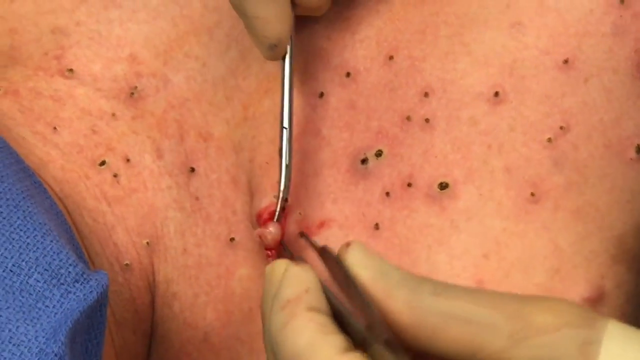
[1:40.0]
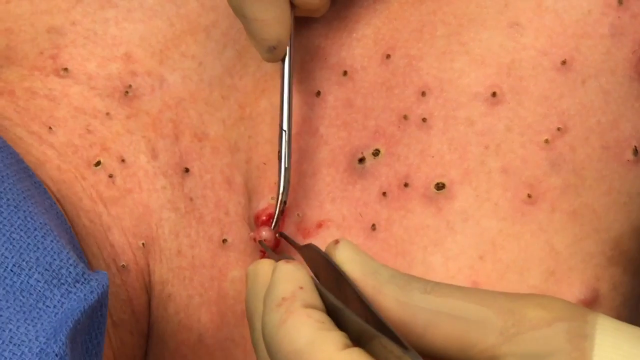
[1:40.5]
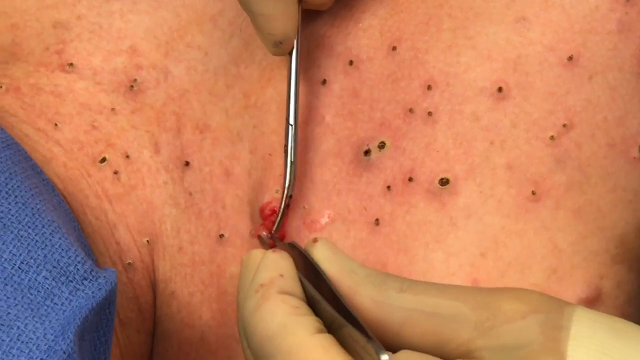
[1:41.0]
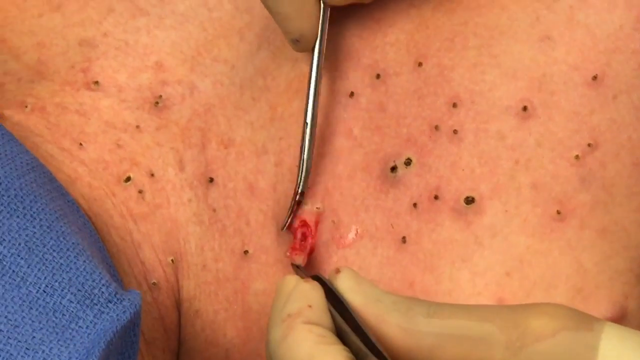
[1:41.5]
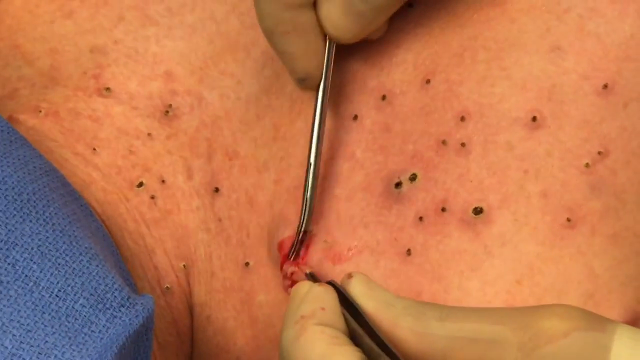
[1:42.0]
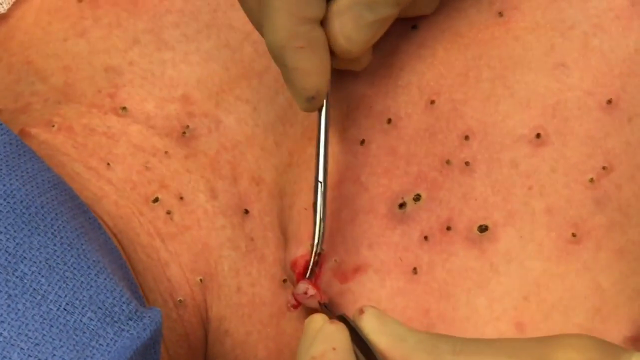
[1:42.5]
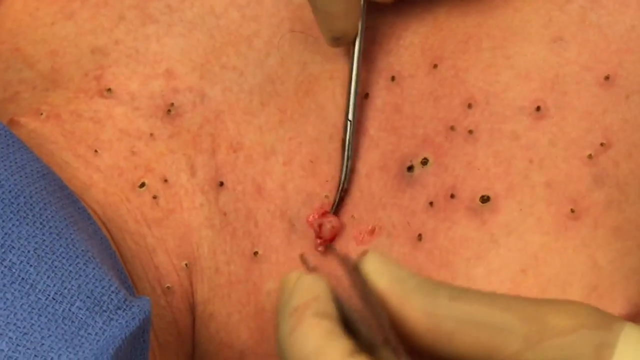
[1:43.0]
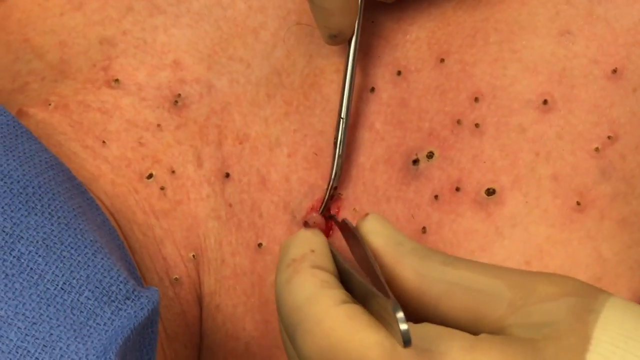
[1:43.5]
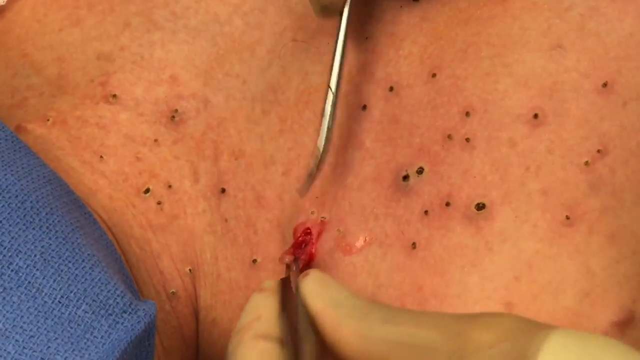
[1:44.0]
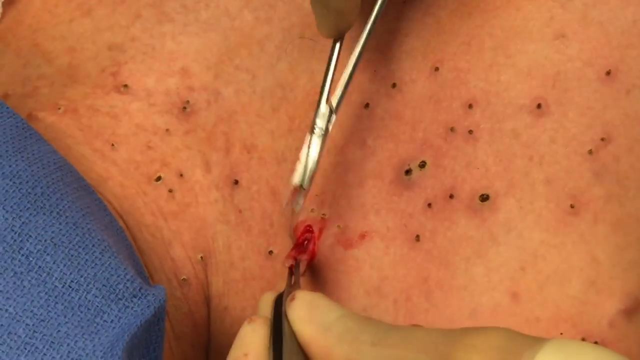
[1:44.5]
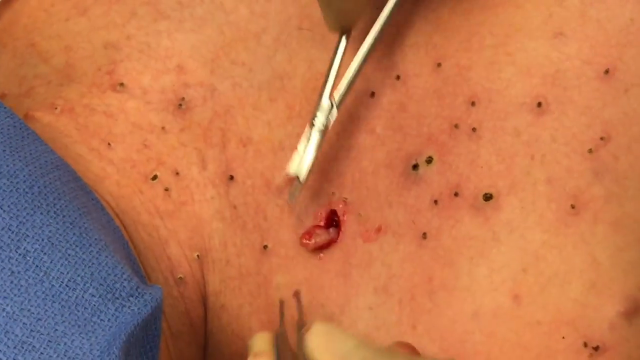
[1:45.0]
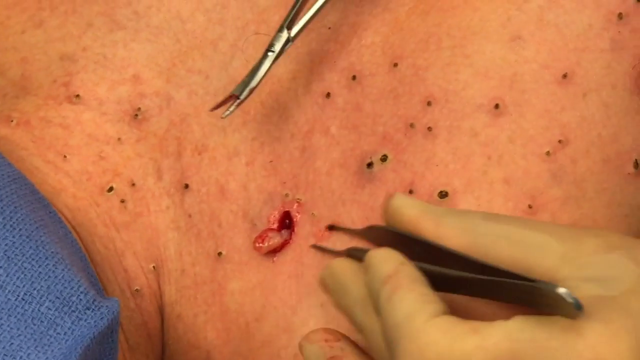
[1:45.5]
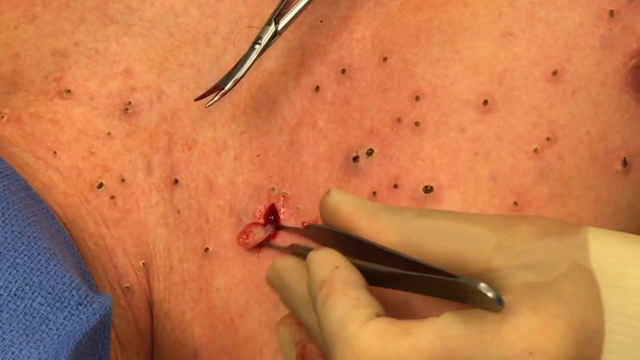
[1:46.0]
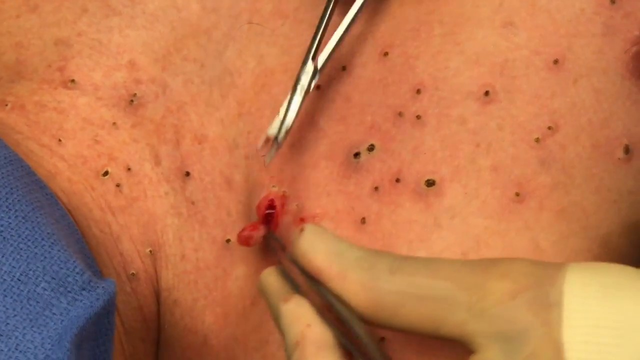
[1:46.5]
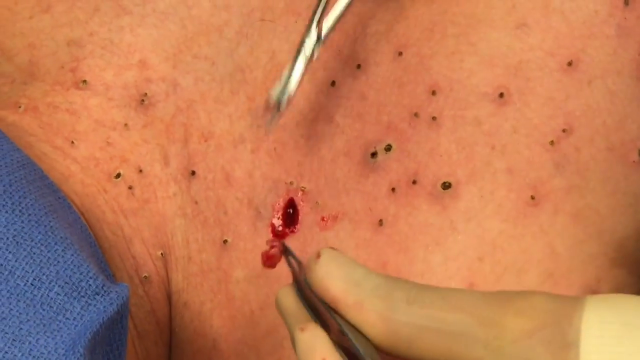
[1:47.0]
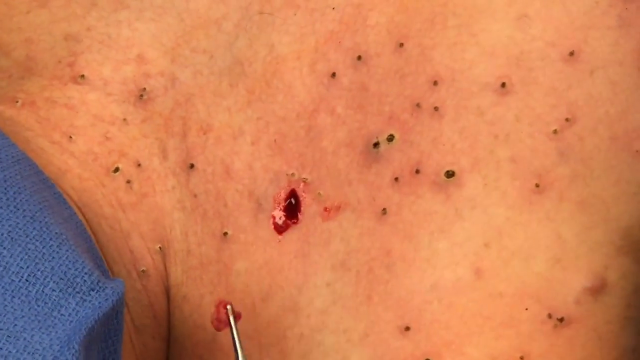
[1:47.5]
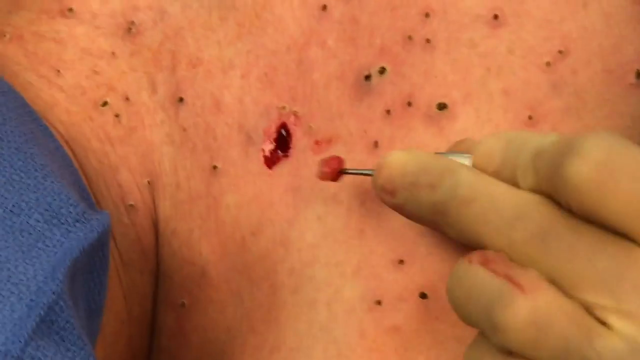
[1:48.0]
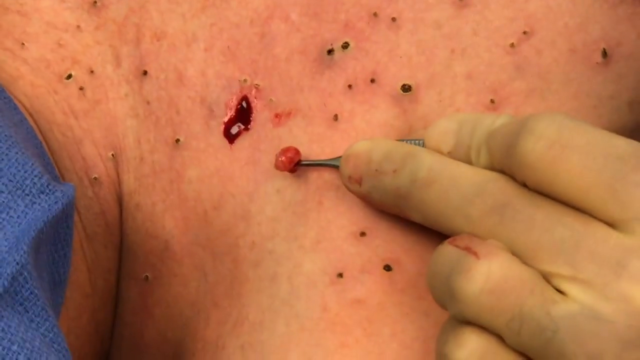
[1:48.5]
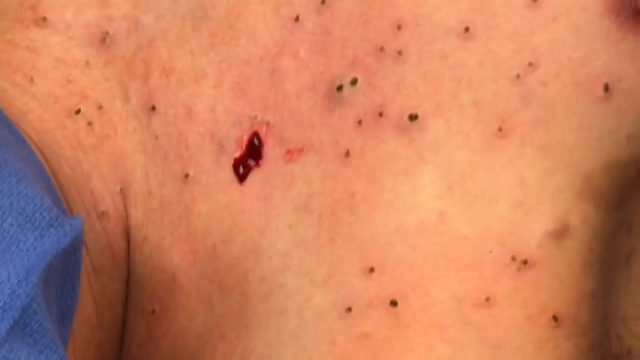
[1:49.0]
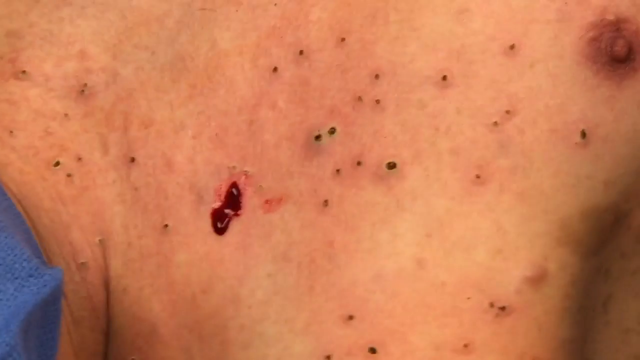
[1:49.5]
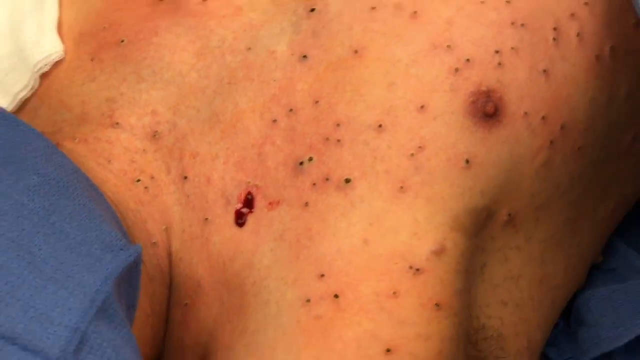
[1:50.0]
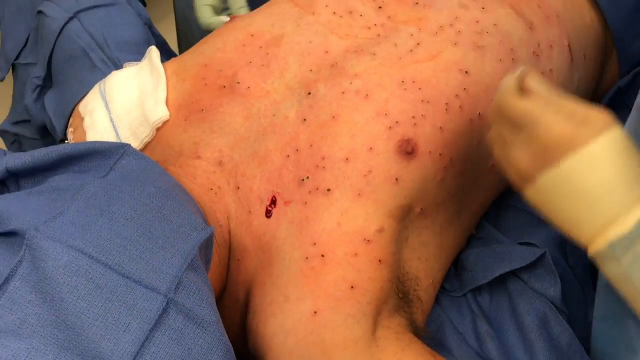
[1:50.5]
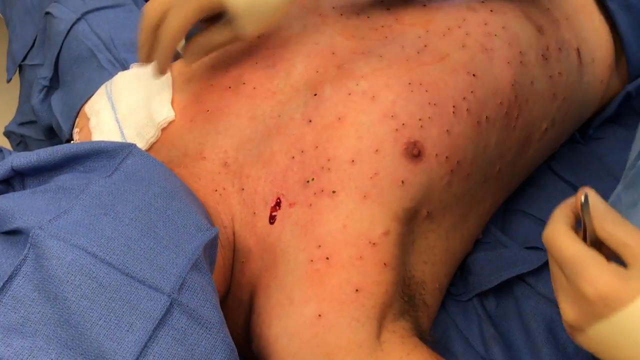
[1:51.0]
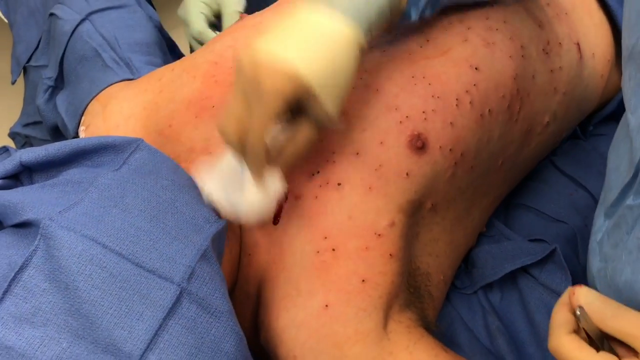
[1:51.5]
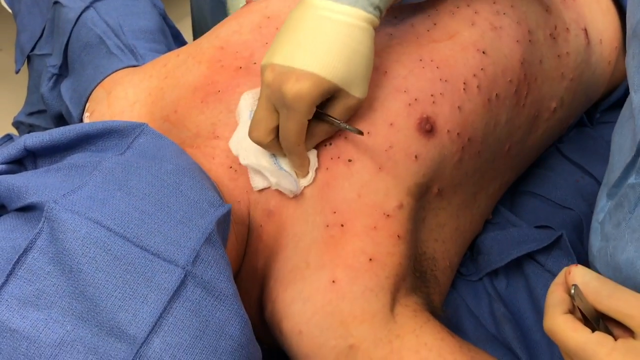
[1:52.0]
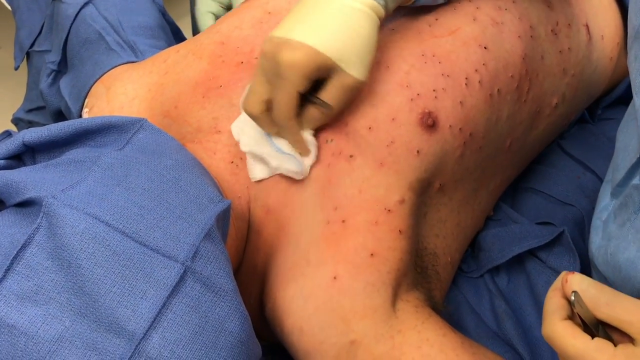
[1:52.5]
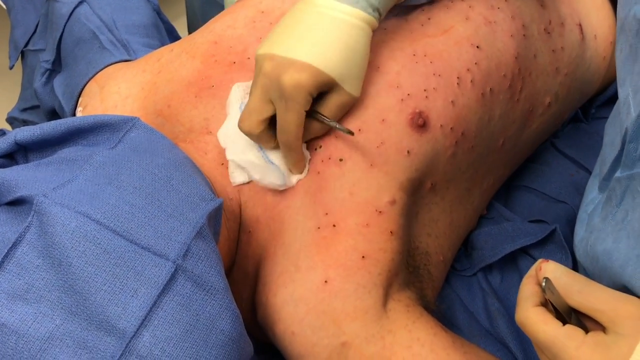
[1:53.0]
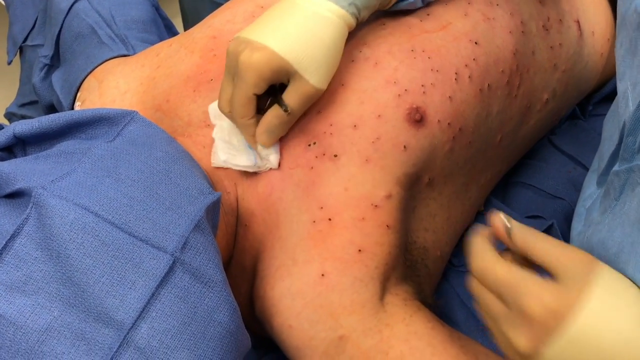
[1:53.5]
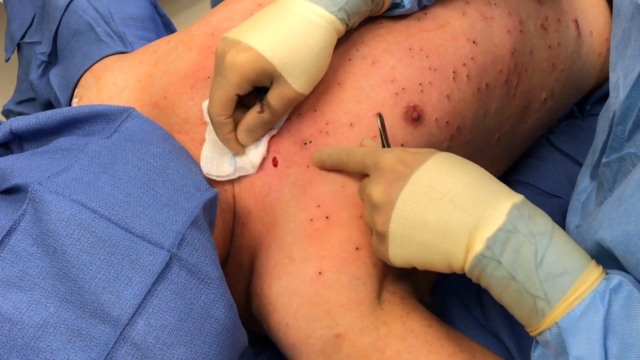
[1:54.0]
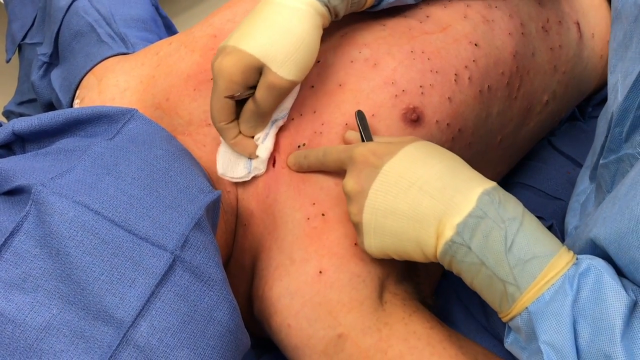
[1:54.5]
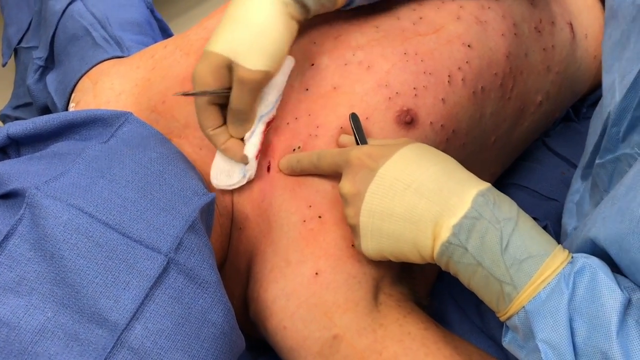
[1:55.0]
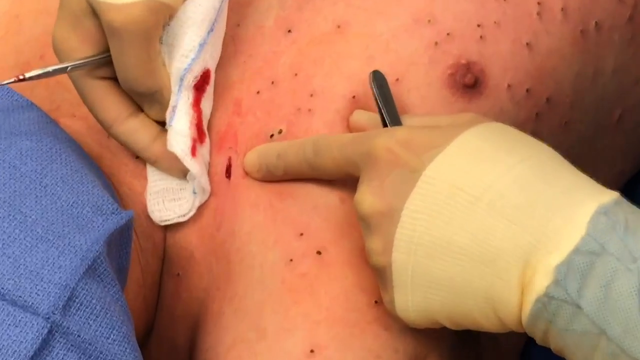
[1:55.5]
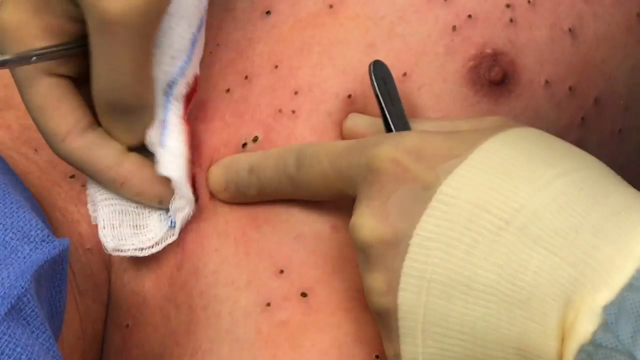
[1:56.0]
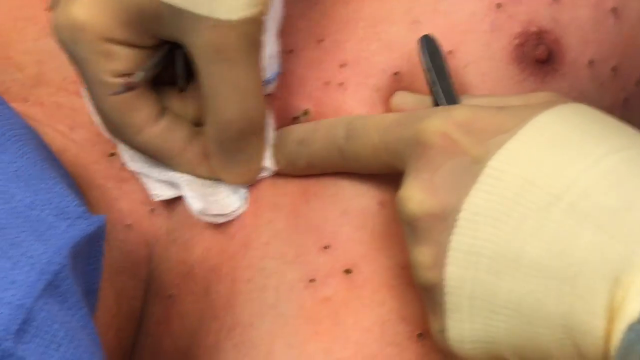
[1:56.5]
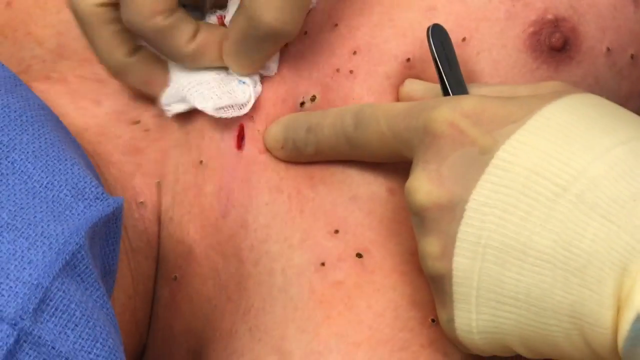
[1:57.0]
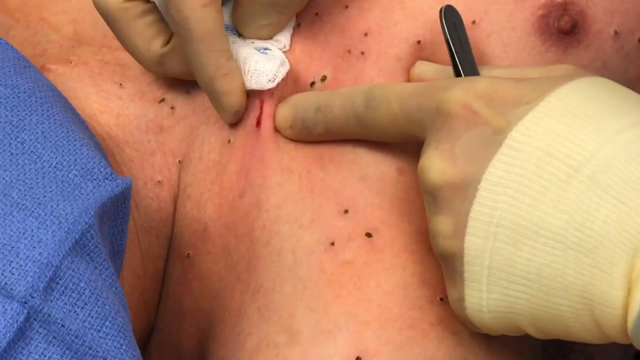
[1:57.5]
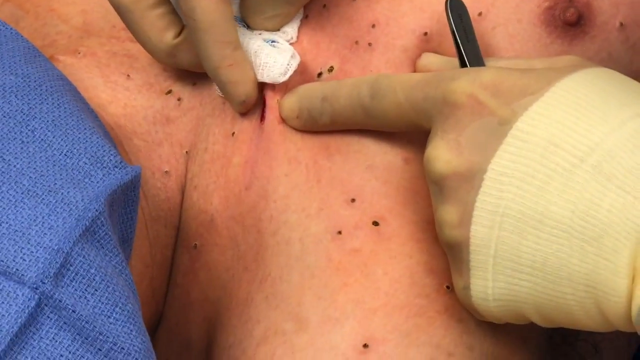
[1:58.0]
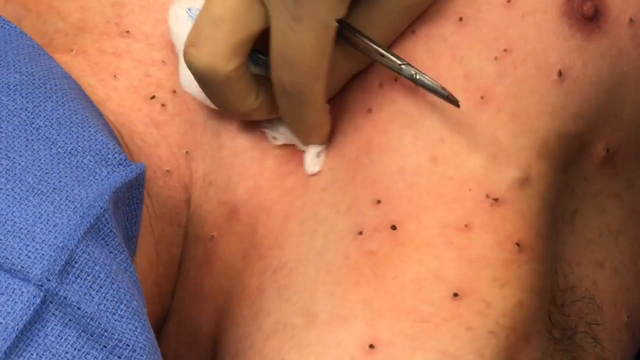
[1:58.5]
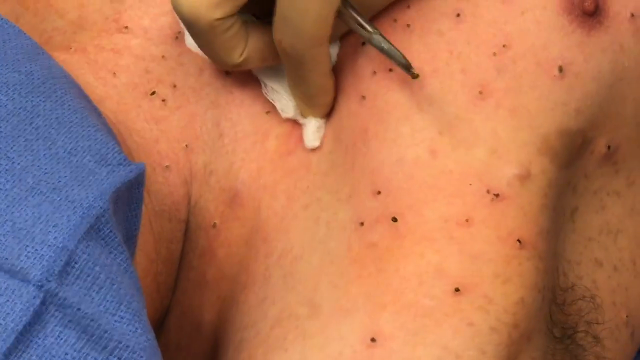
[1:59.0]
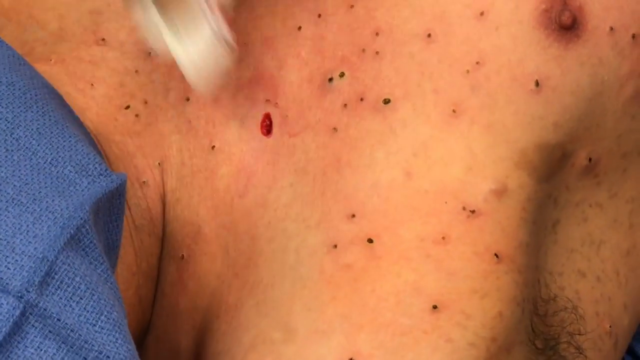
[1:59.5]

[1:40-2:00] The dermatologist works to remove the neurofibroma from the skin of a Caucasian male patient. Having cut around its base, he grasps and works the fibroma out from under the skin with surgical scissors in his right hand and surgical tweezers in his left. The fibroma is a fatty, globular mass, a bit bigger on the underside than it appeared in the skin, and it is surrounded by many smaller fibromas already burned with a small handheld laser. The doctor wears white nitrile gloves on both hands. He pulls the fibroma out, looks at it, and sets it to the side, then takes a piece of gauze that was placed on the patient's left shoulder and blots the hole, checks inside to make sure the whole fibroma is out, blots a little more, and leaves a small oval spot where the fibroma was removed. The gauze is bright white with a bit of bright wet blood on it. A blue surgical sheet covers the patient's face and his extended left arm. He is topless from the waist up, with a slight bit of hair visible in his right armpit, and his areola and nipple are visible. Directly above them is a small, light brown, somewhat oval birthmark right at the edge of his chest wall and armpit.